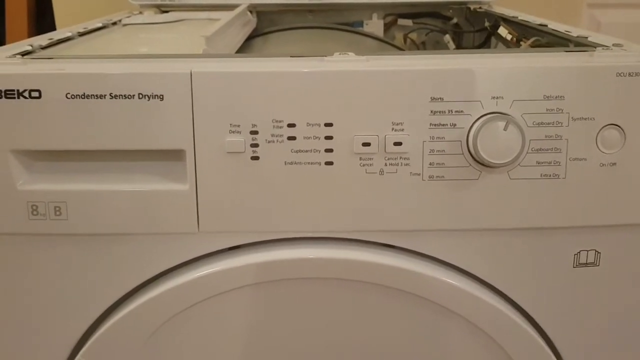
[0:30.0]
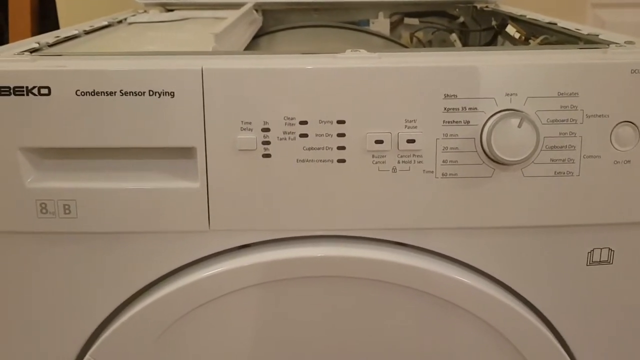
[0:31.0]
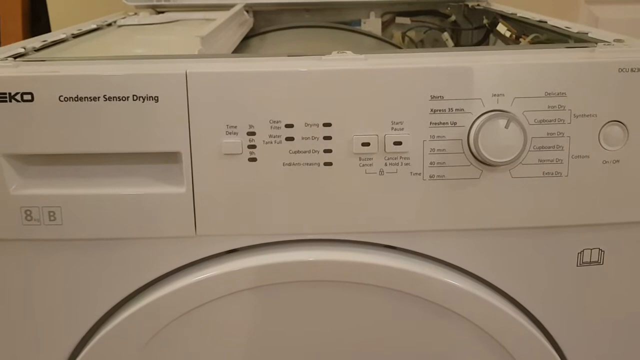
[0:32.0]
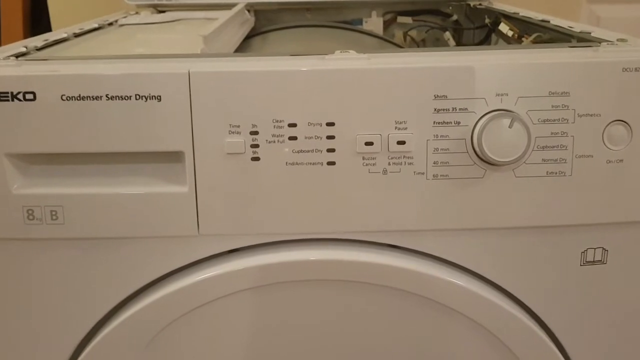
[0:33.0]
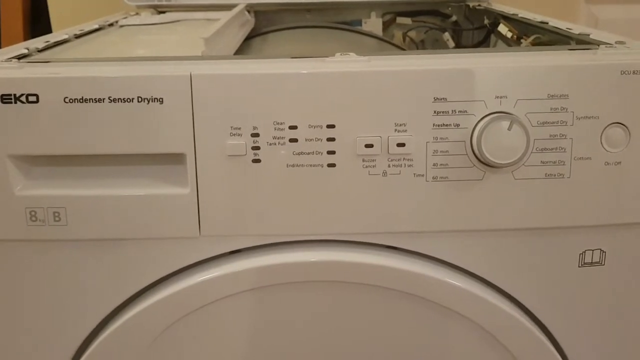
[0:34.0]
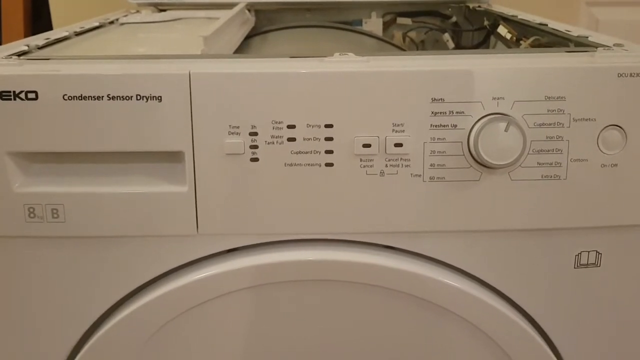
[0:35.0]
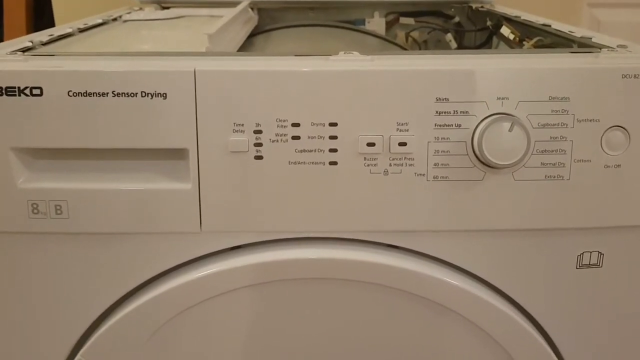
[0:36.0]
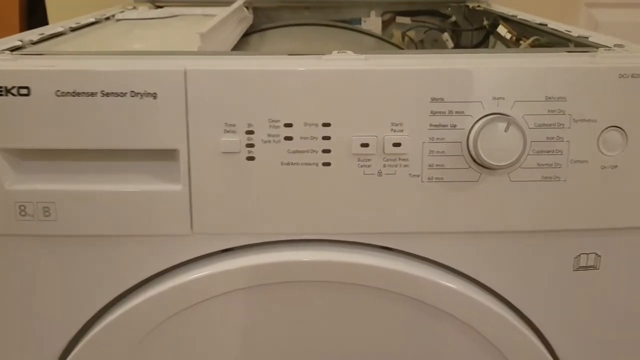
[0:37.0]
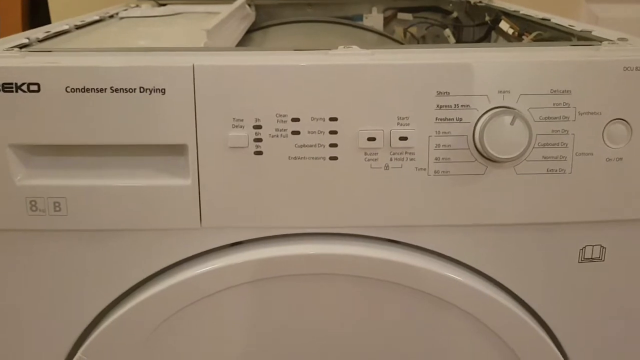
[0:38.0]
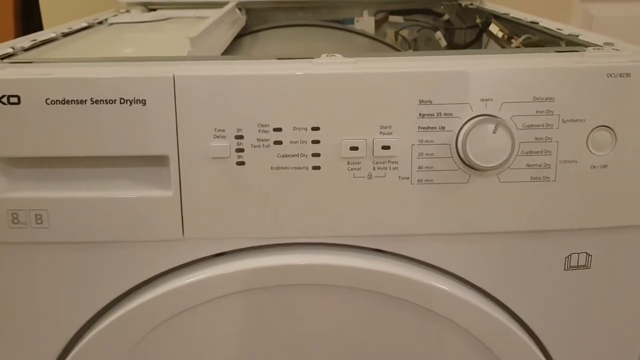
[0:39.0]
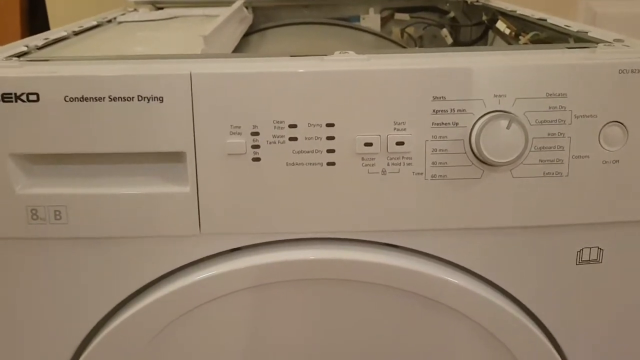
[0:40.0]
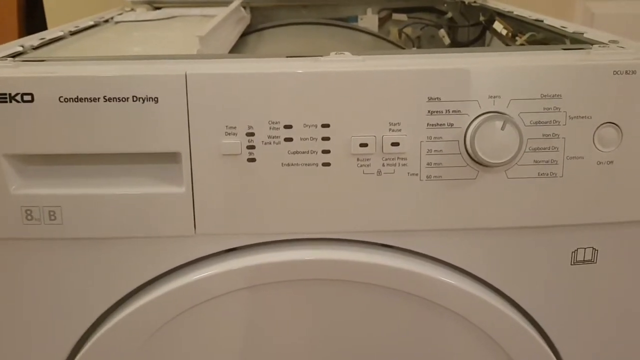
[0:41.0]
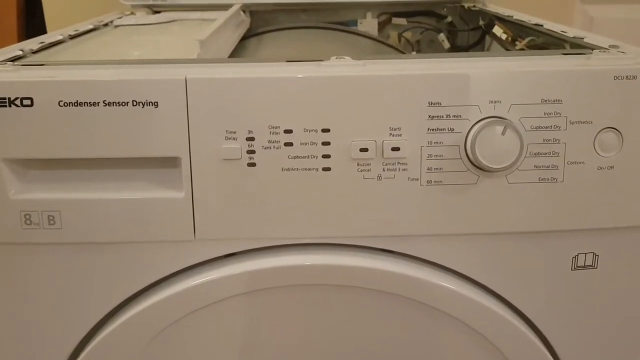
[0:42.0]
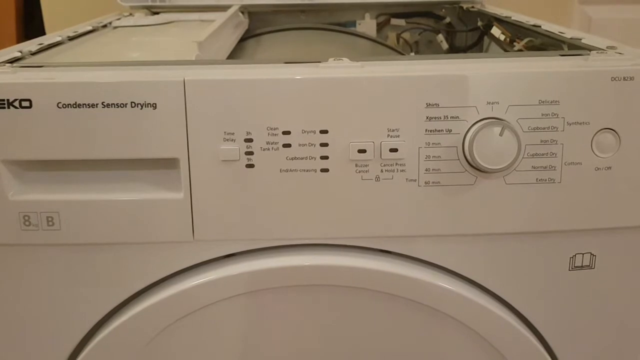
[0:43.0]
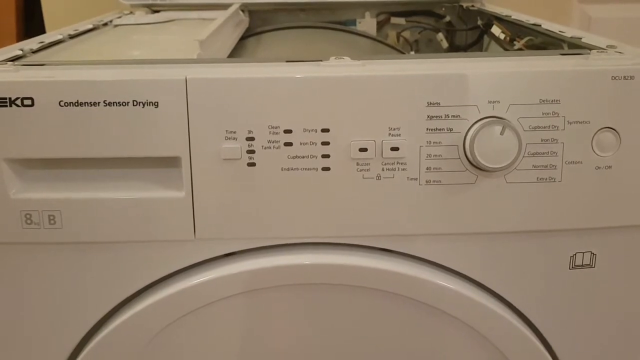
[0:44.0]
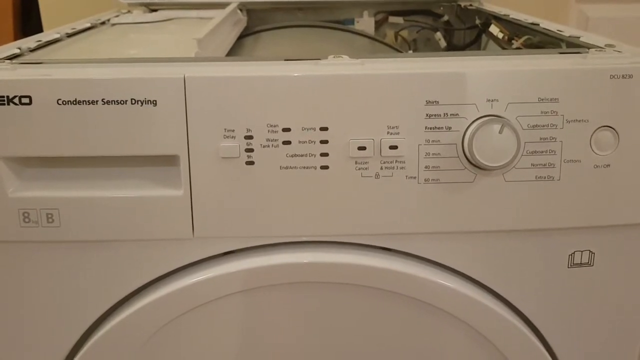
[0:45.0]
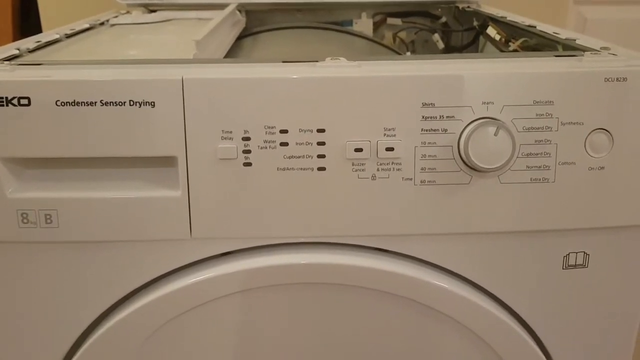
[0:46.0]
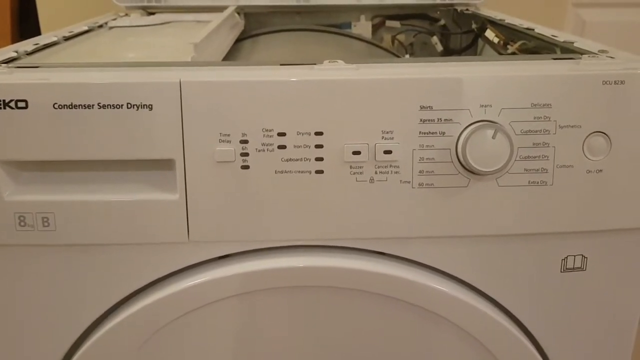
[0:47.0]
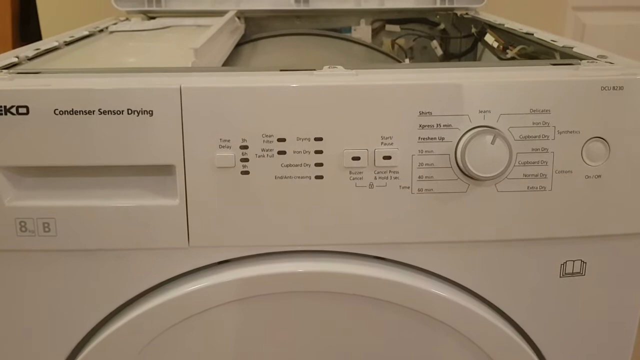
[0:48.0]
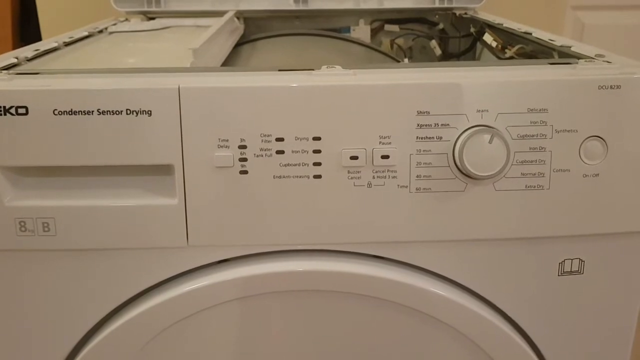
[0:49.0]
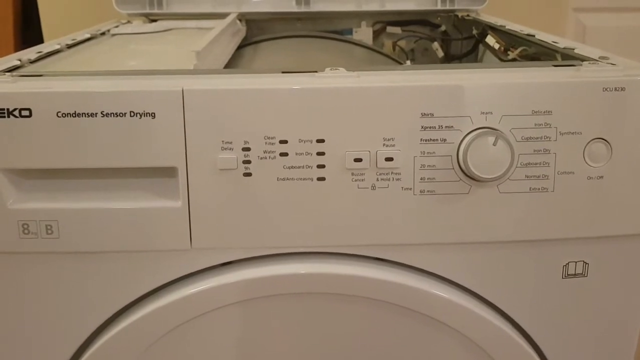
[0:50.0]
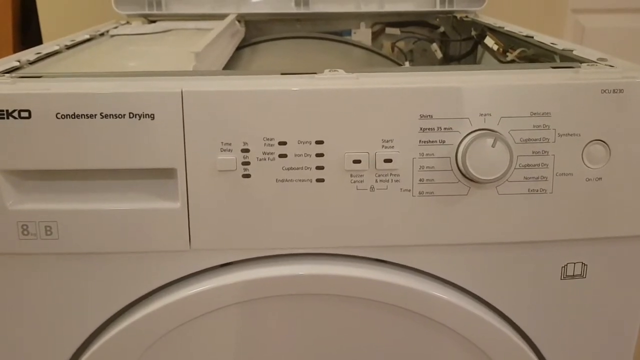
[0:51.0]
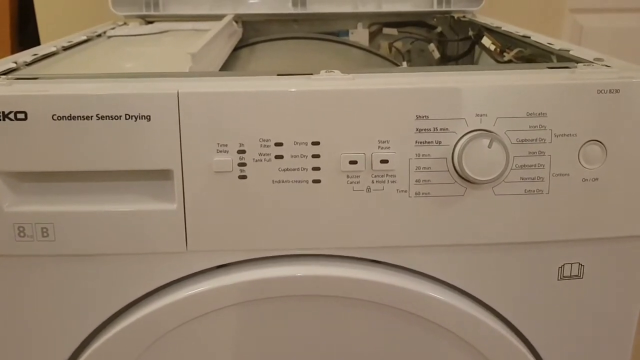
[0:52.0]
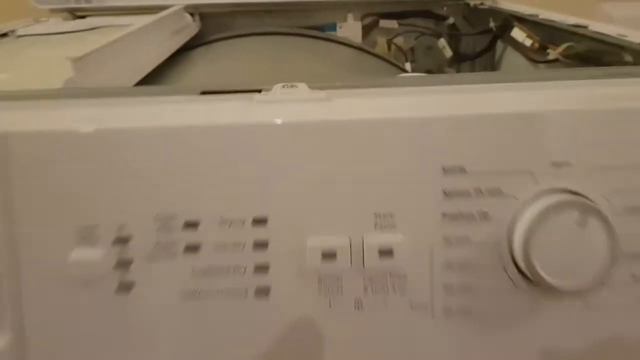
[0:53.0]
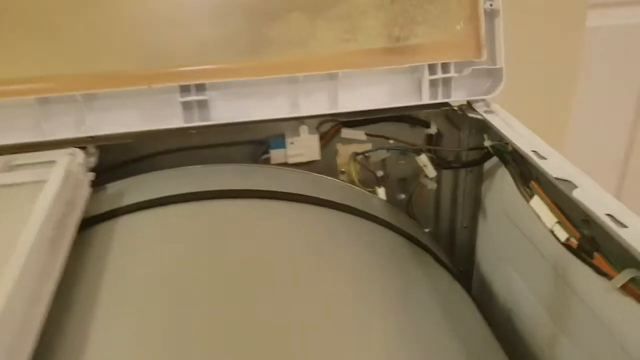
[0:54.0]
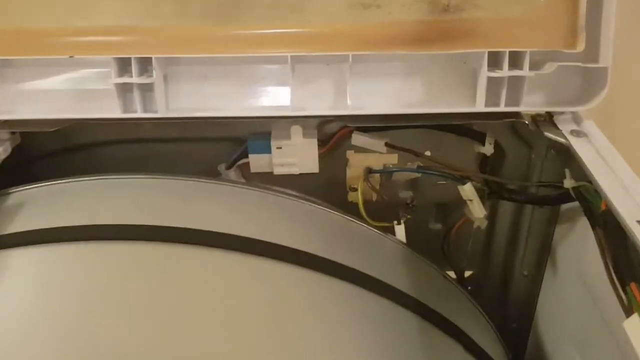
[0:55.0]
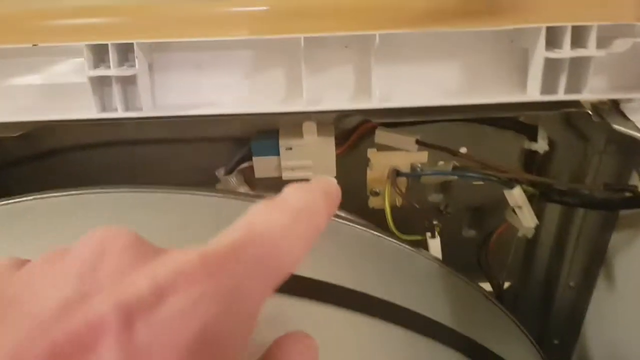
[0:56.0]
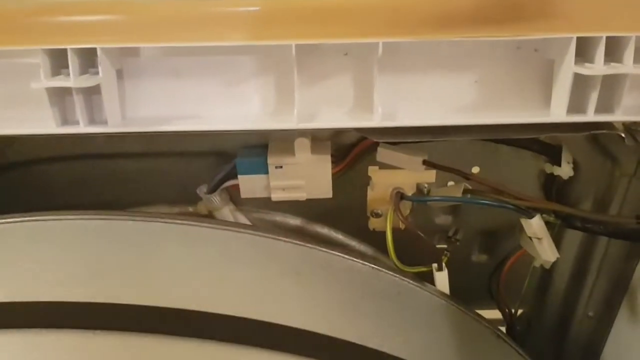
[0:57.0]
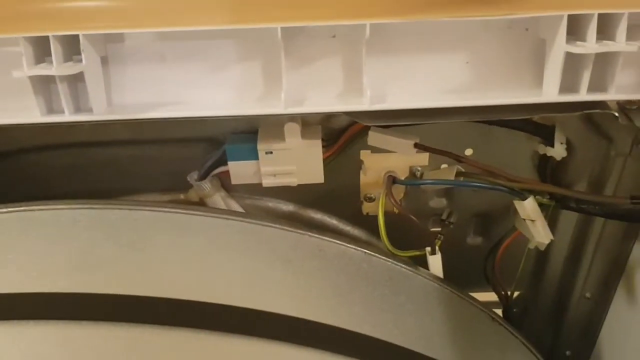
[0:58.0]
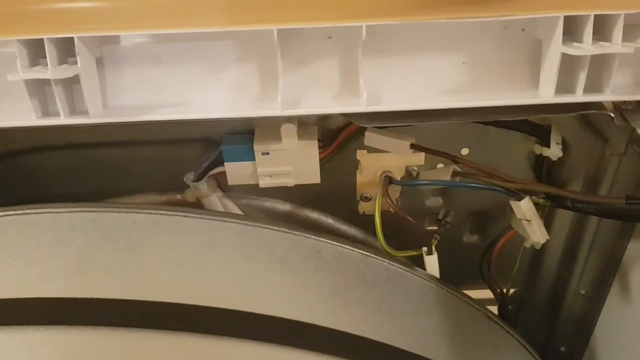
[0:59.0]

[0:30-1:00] The top part of the dryer is still shown, and the camera is not steady, bobbing a lot. Lots of wires are visible. The camera zooms in on a section of the open lid, right back to the wire area, and a finger comes in to point at some of the wires. The heating element is in the back, along with a blue wire and a yellow wire that have little white clamps on them. The person points way in the back, behind the big drum where the clothes go, and zooms in on this section.